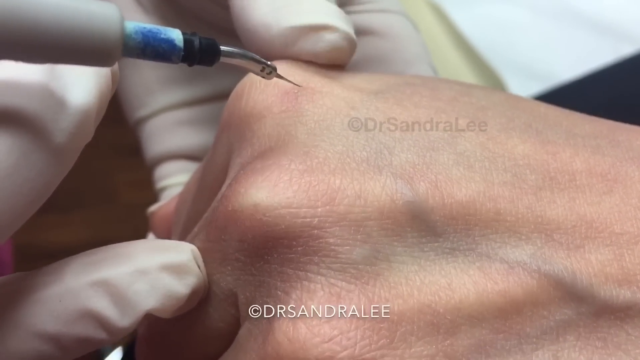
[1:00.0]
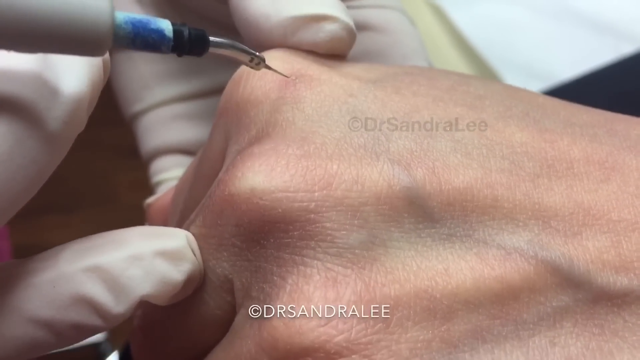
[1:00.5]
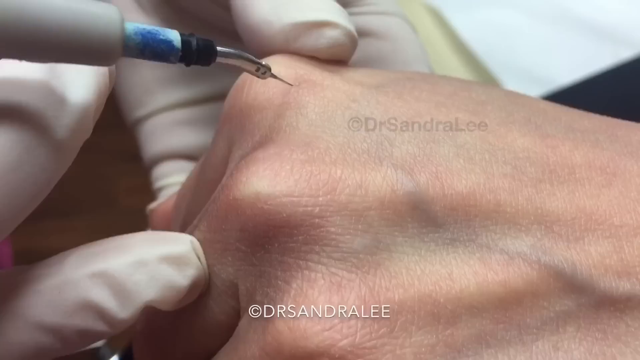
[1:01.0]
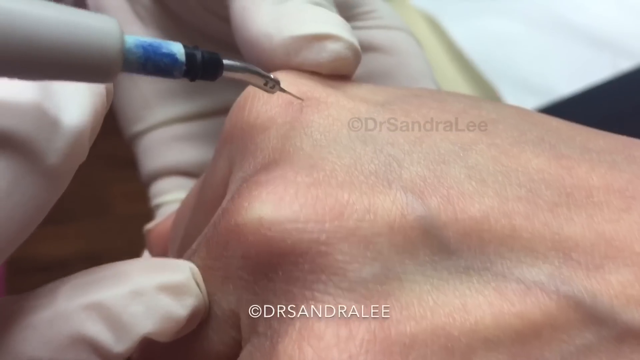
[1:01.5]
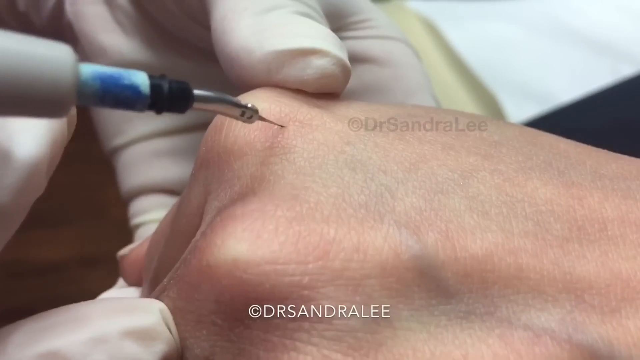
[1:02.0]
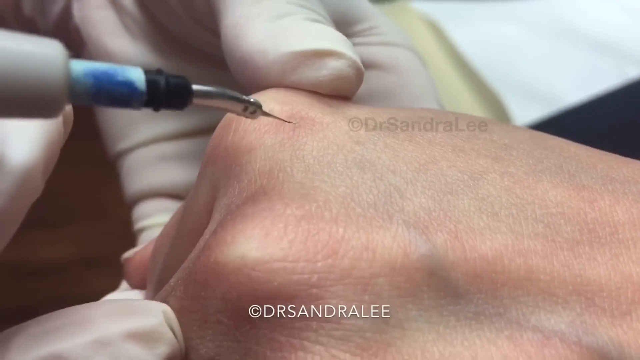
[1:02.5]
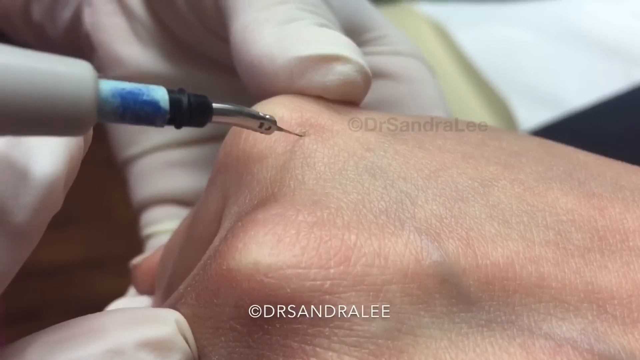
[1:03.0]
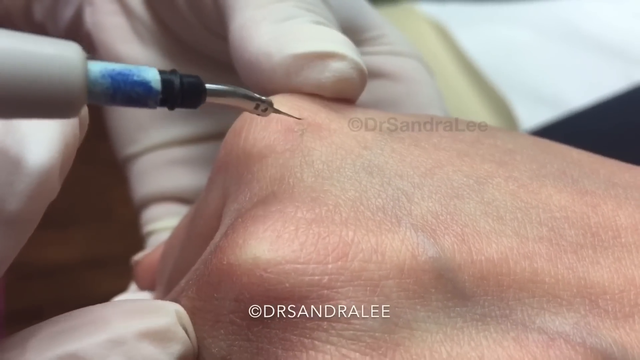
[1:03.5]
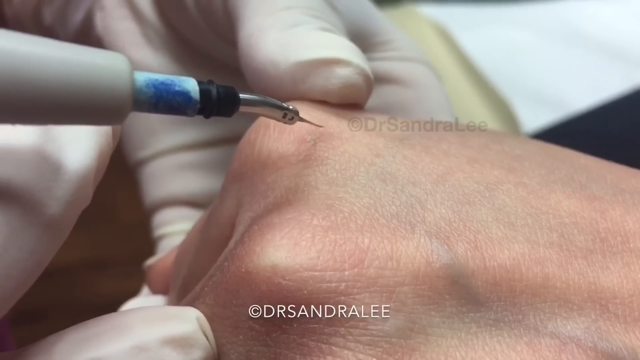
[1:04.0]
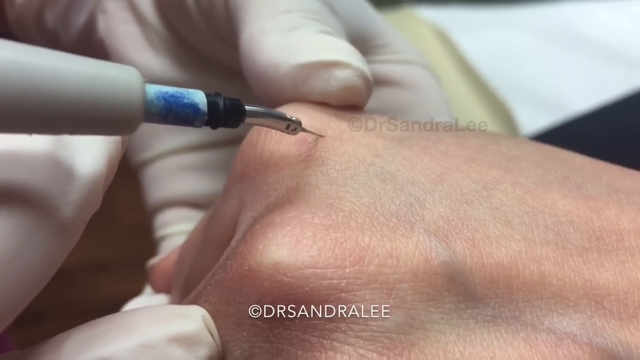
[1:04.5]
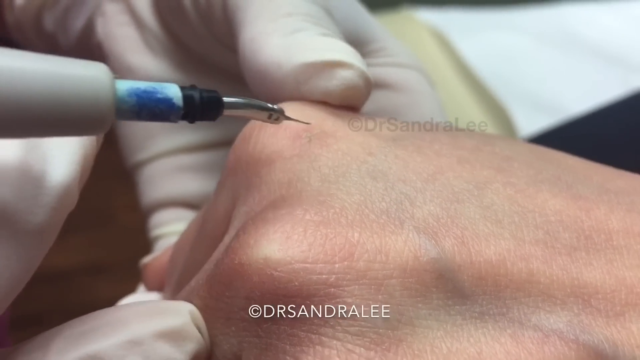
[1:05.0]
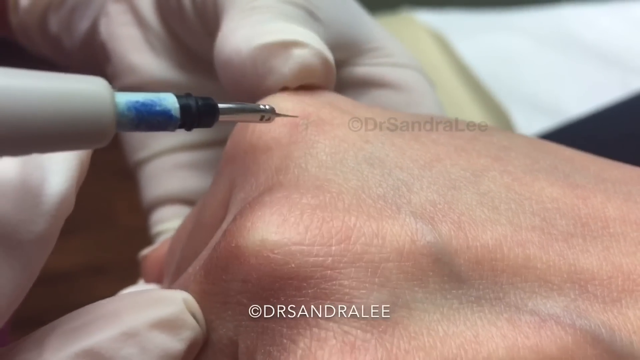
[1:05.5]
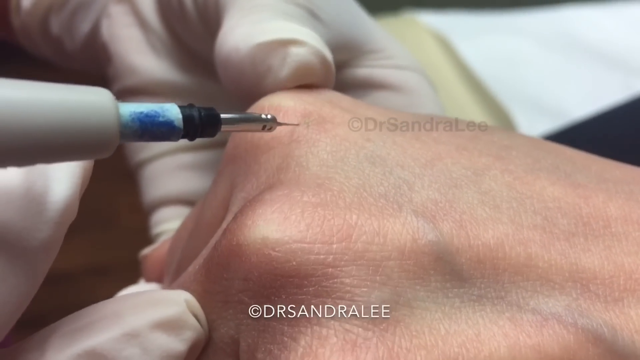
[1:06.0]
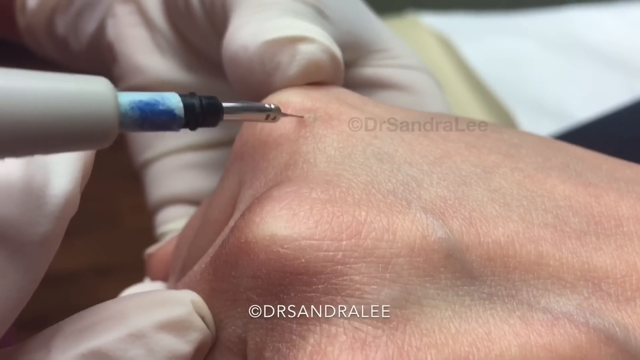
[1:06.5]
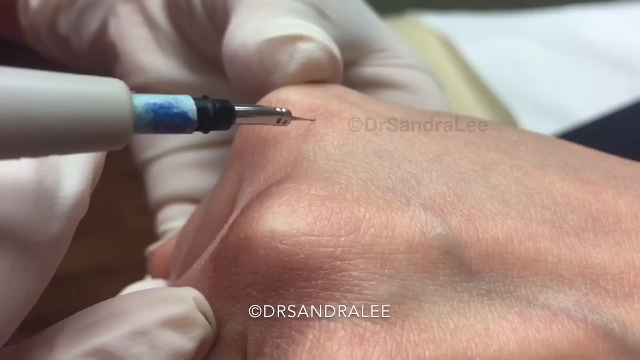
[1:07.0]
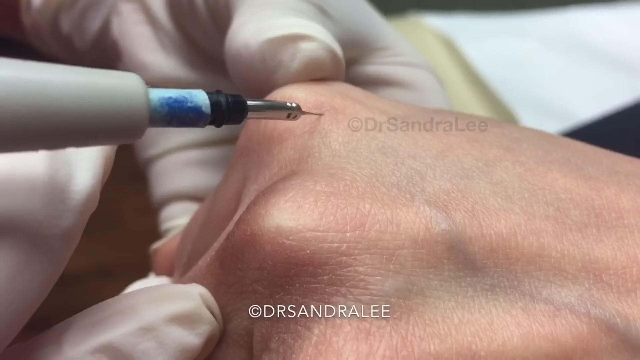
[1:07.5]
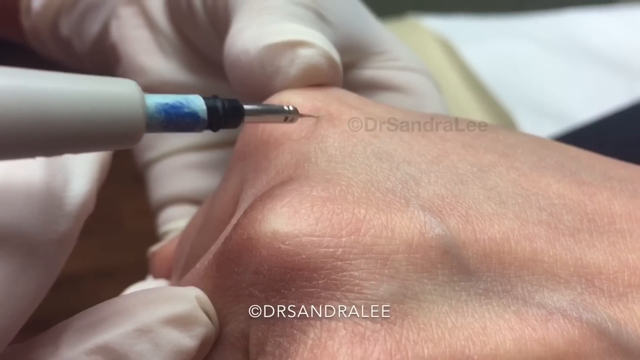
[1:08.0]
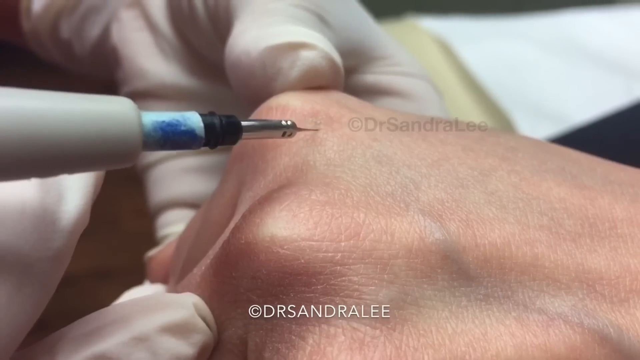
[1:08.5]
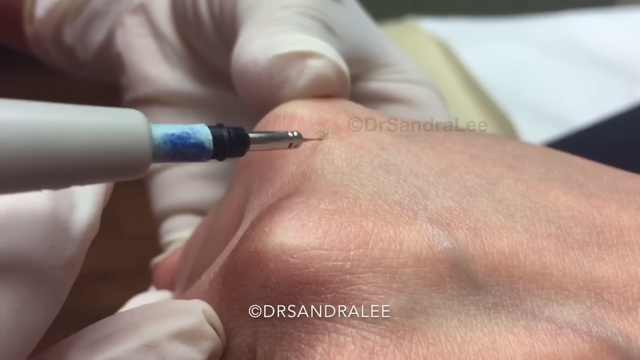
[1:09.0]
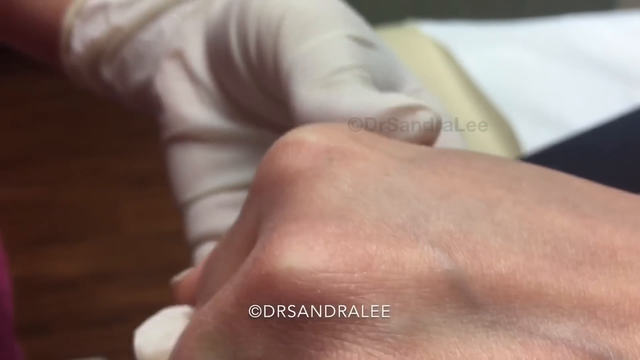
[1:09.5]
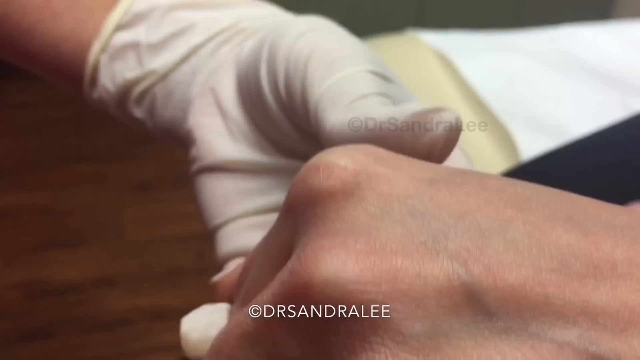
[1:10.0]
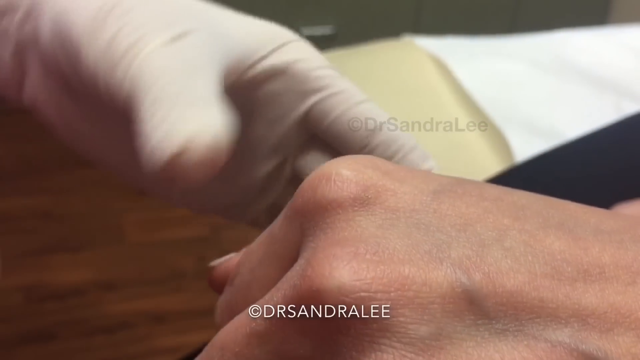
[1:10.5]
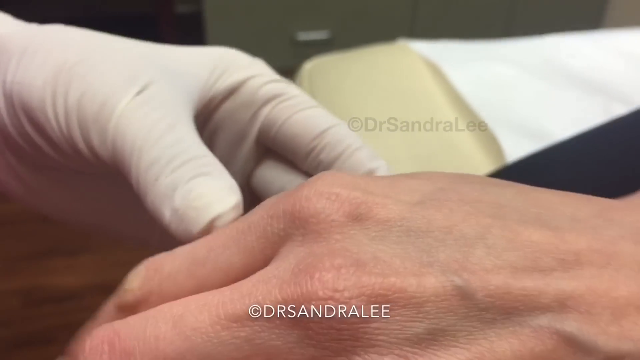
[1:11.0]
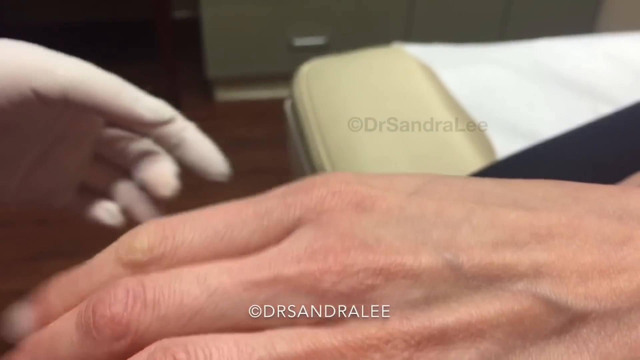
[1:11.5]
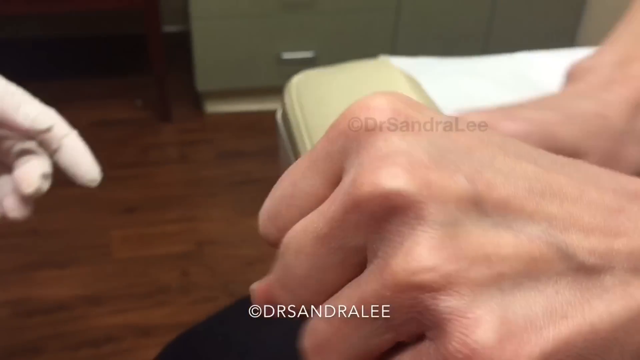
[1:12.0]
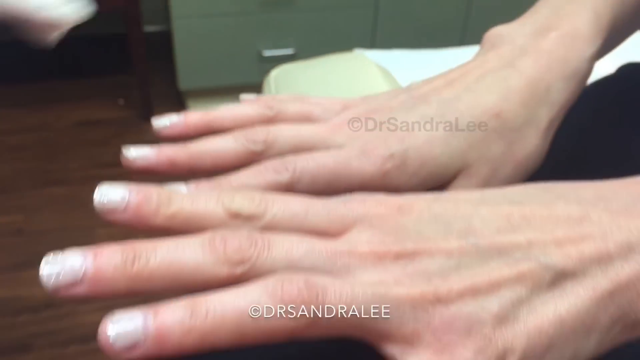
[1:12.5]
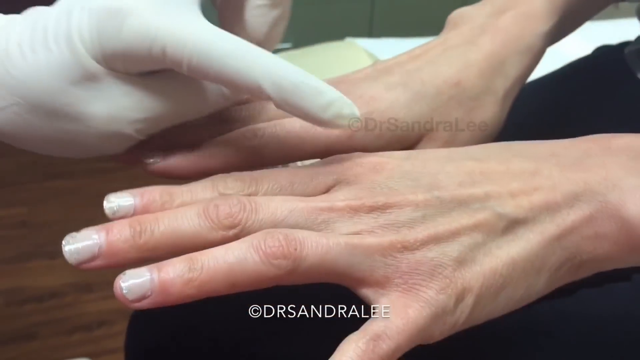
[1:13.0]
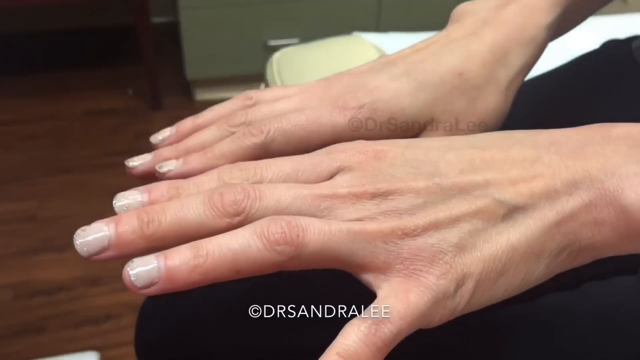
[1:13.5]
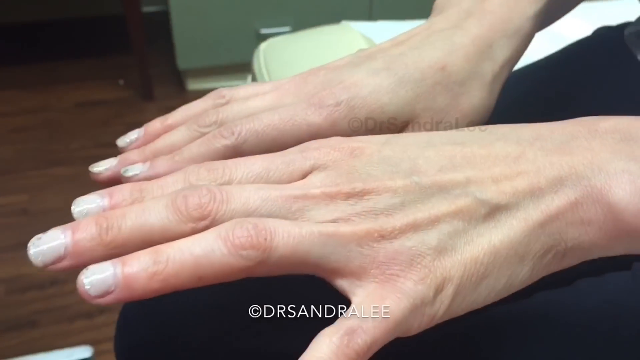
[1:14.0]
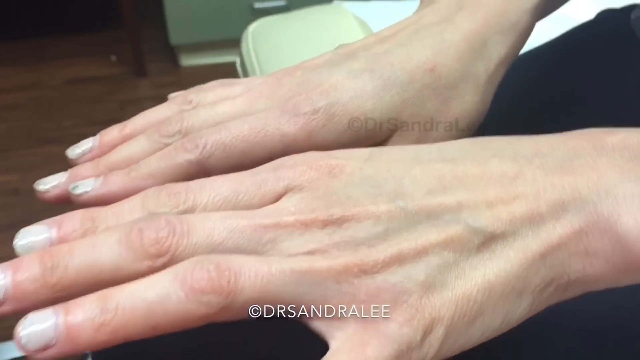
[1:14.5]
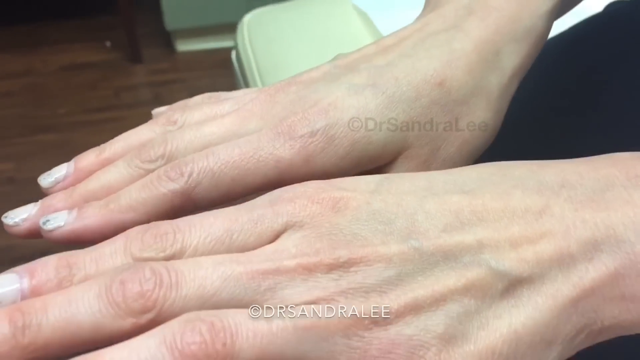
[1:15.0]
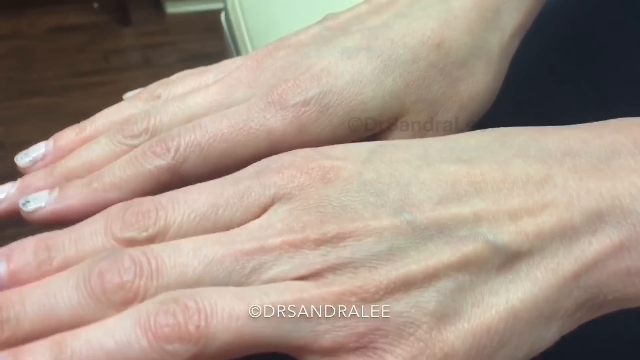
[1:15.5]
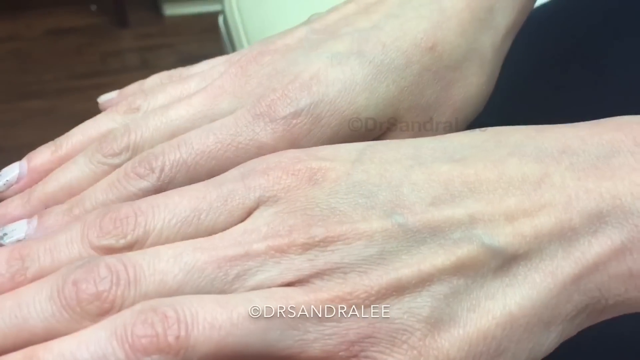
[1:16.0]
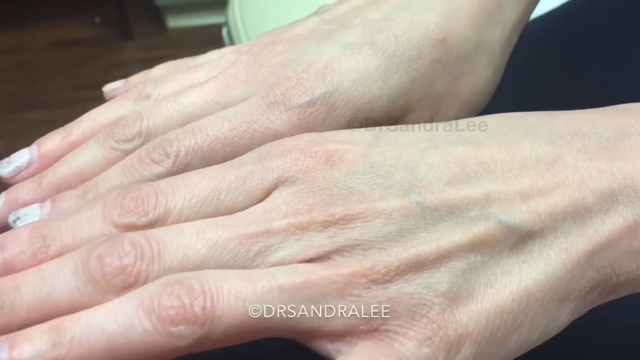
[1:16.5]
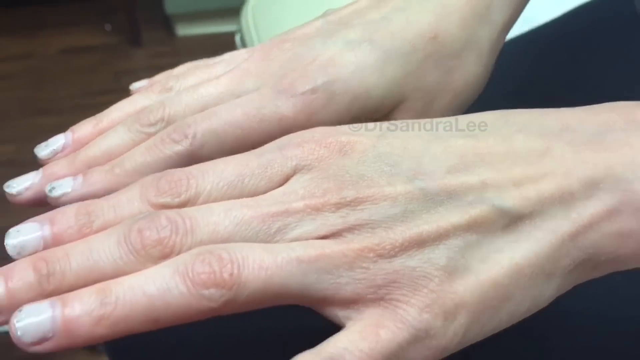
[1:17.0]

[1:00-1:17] The apparatus, which looks like a needle-like contraption but is apparently a light device, is touched to the spots on his hands, now seemingly at the borders of the spots, for about a second each. The man then looks at his hands, kind of stretches them, and clenches them in and out. The marks appear to have definitely faded or even disappeared. On-screen text states that it is copyrighted by Dr. Sandra Lee, written as one word and spelled "DRSANDRALE".